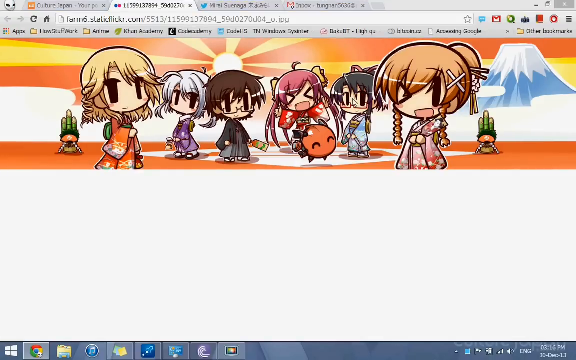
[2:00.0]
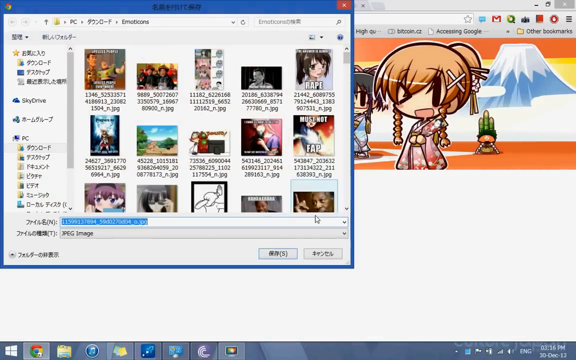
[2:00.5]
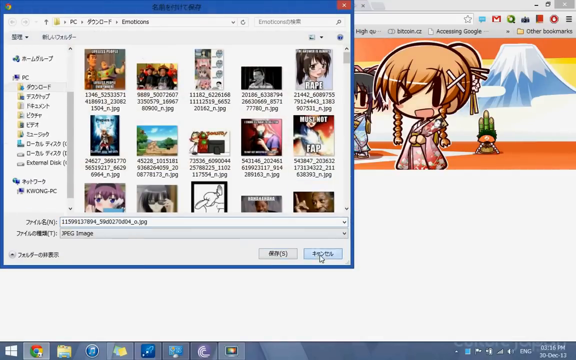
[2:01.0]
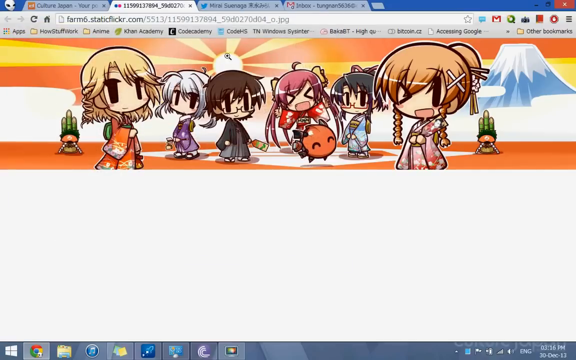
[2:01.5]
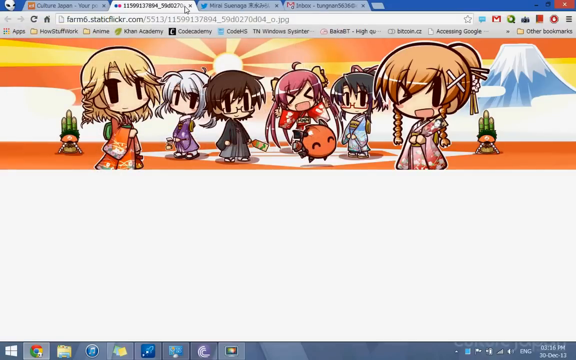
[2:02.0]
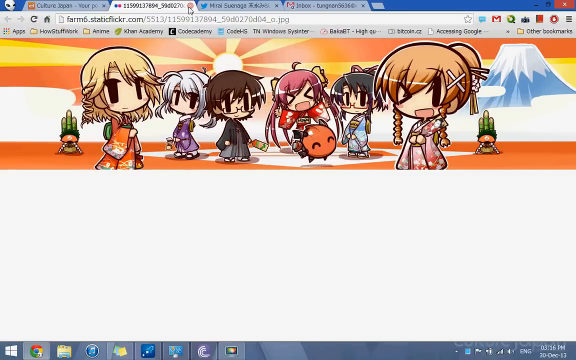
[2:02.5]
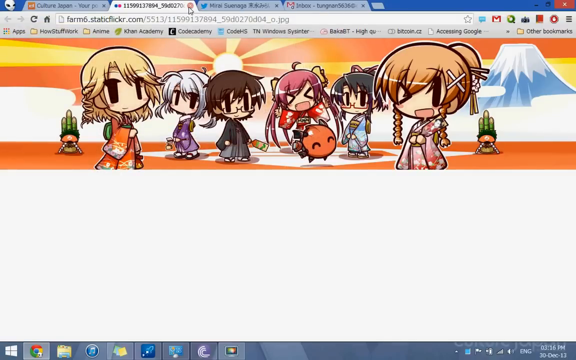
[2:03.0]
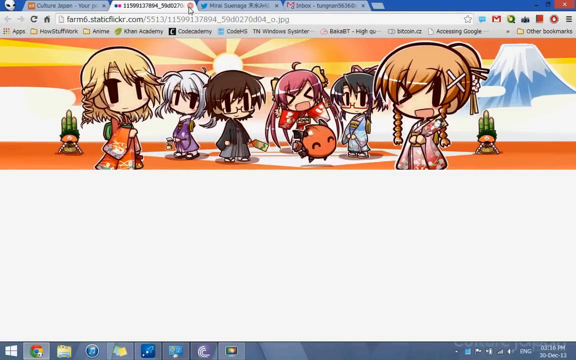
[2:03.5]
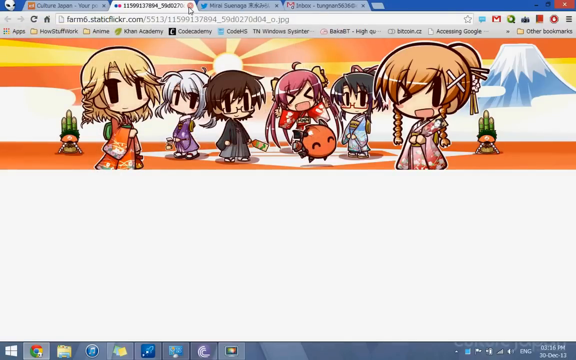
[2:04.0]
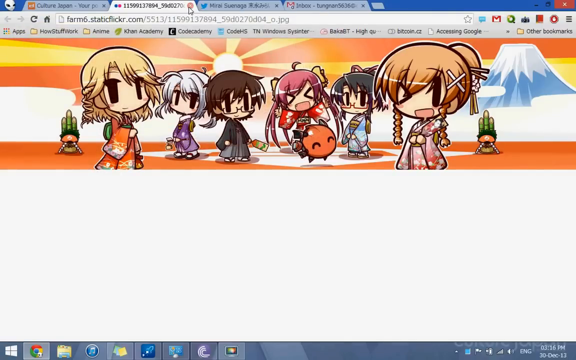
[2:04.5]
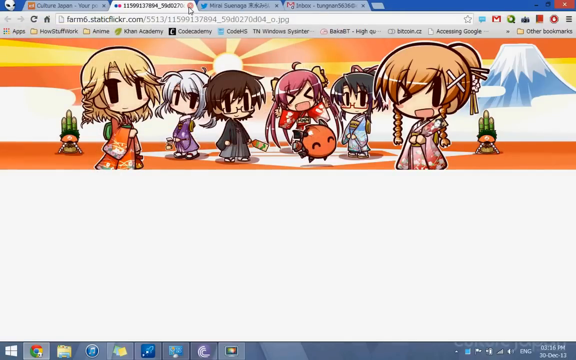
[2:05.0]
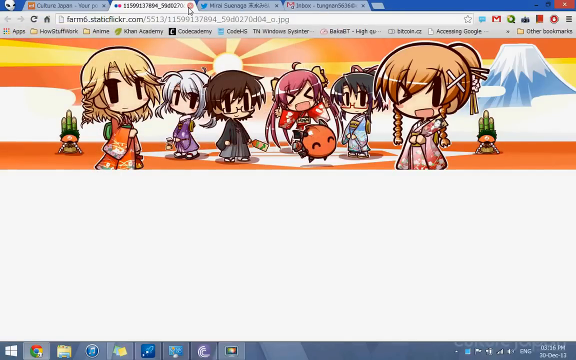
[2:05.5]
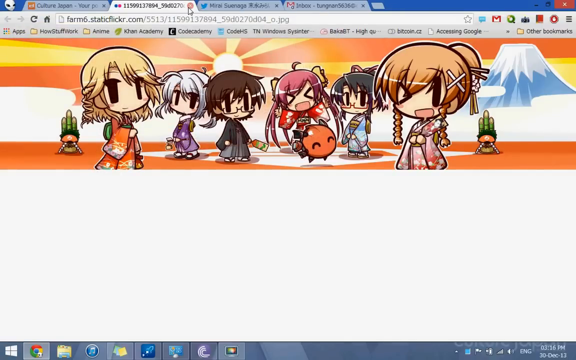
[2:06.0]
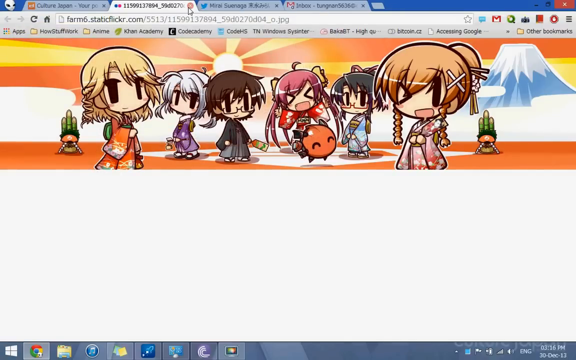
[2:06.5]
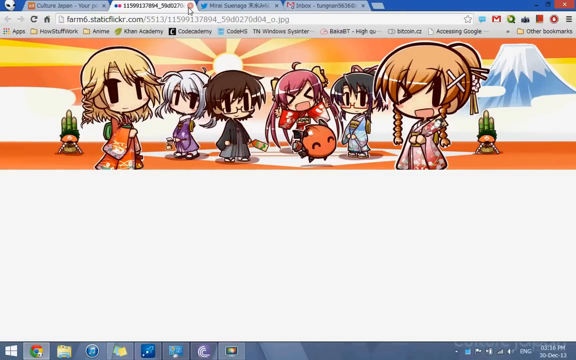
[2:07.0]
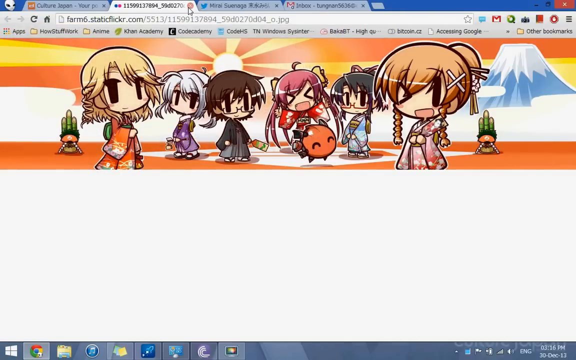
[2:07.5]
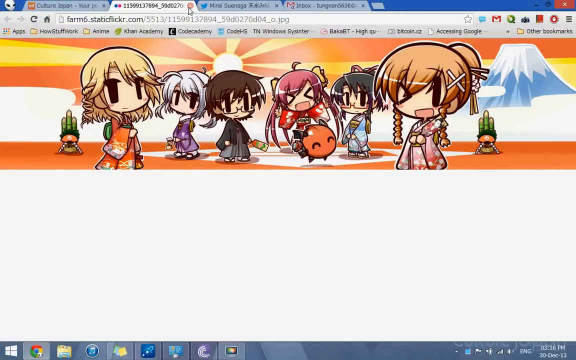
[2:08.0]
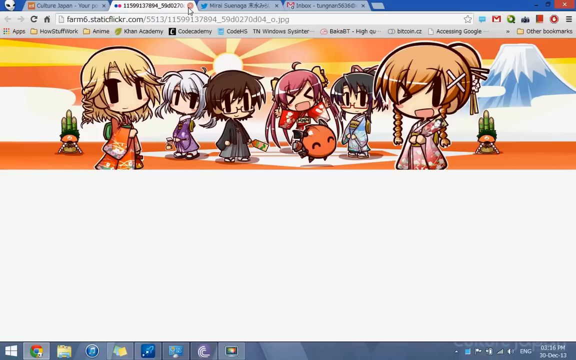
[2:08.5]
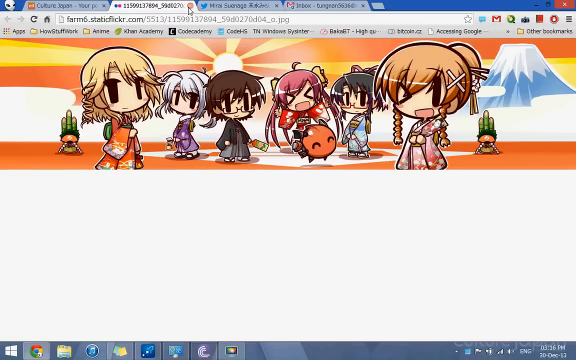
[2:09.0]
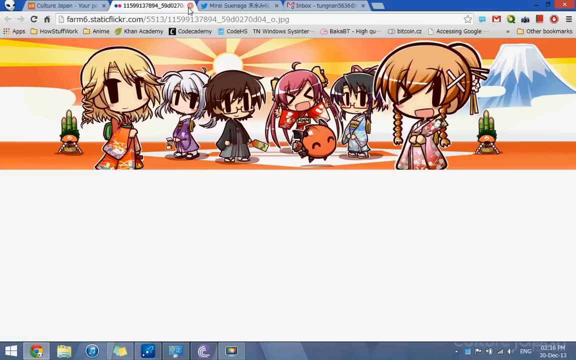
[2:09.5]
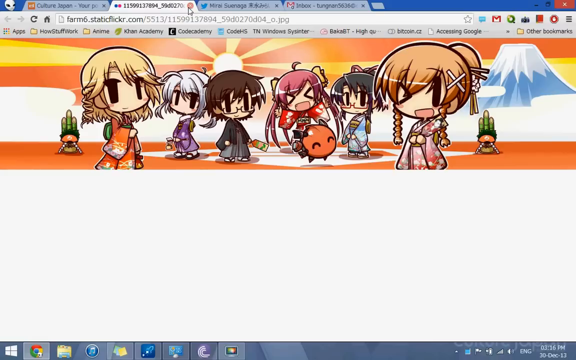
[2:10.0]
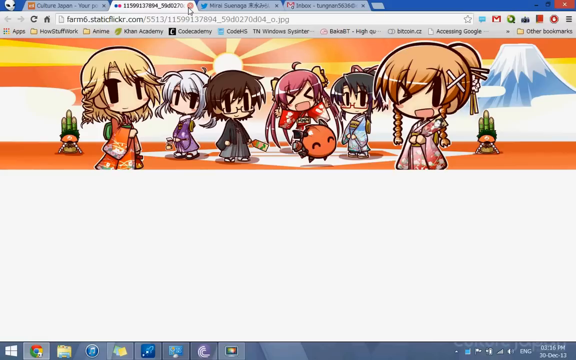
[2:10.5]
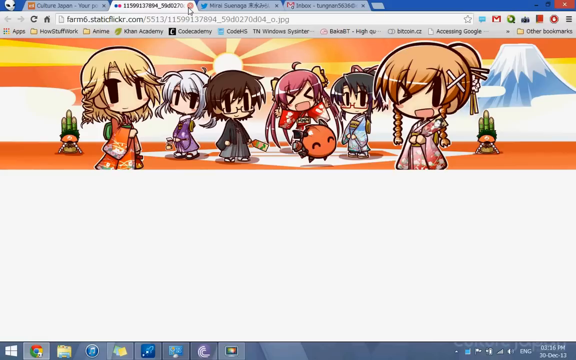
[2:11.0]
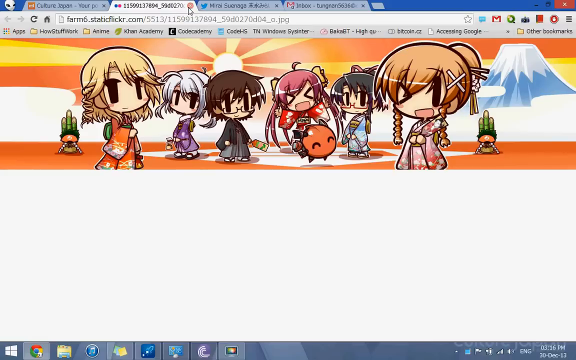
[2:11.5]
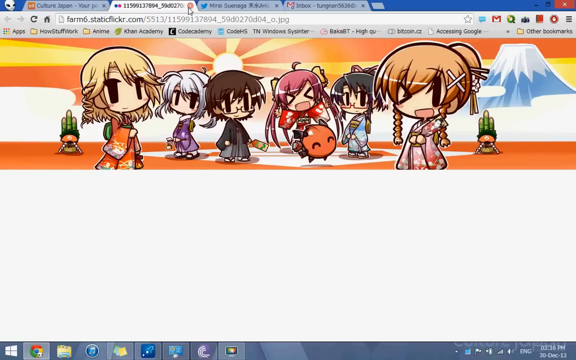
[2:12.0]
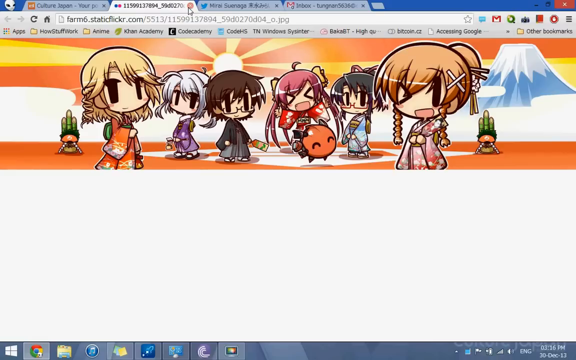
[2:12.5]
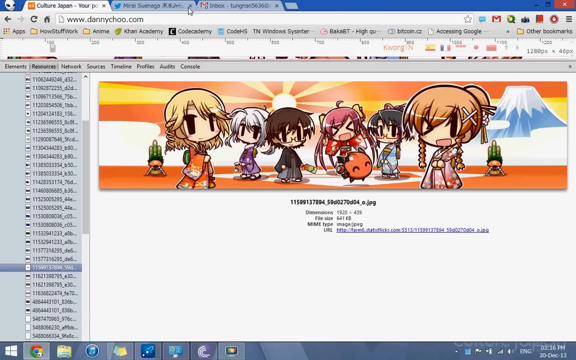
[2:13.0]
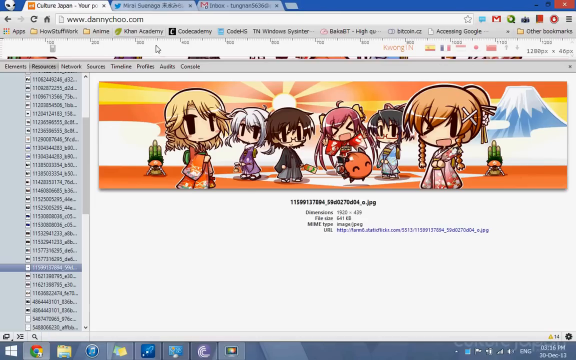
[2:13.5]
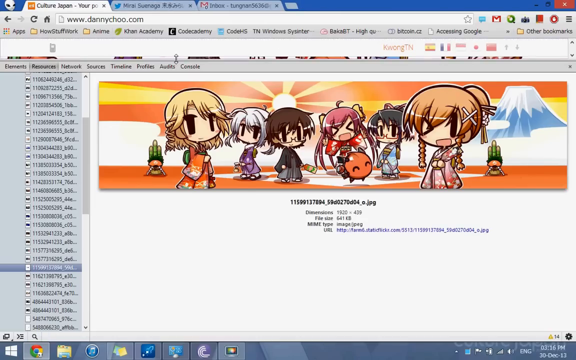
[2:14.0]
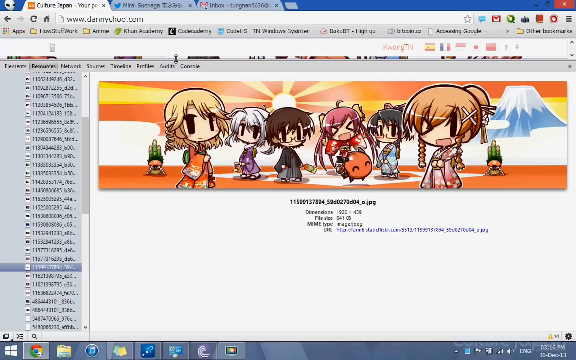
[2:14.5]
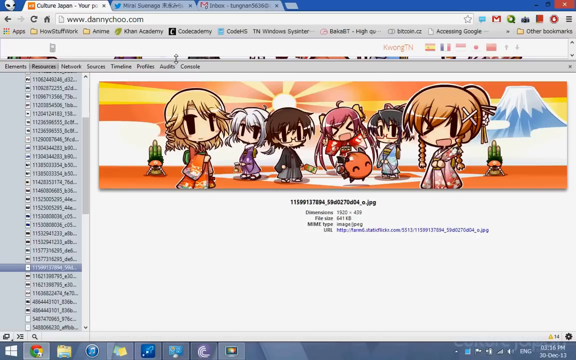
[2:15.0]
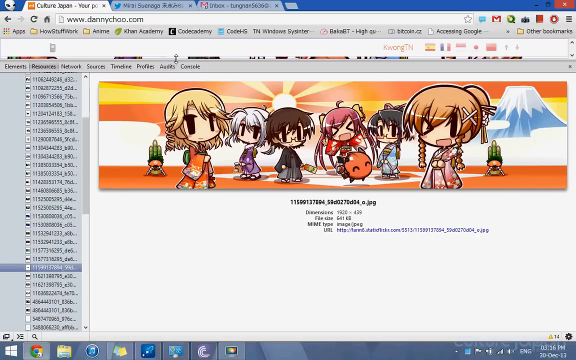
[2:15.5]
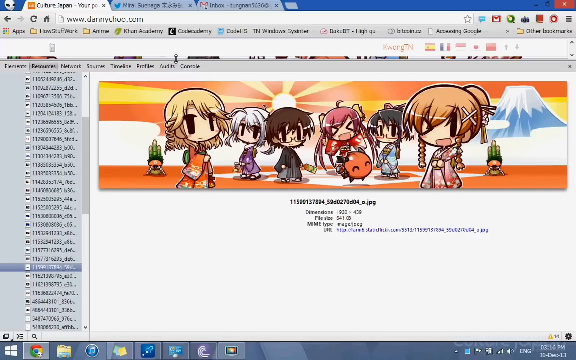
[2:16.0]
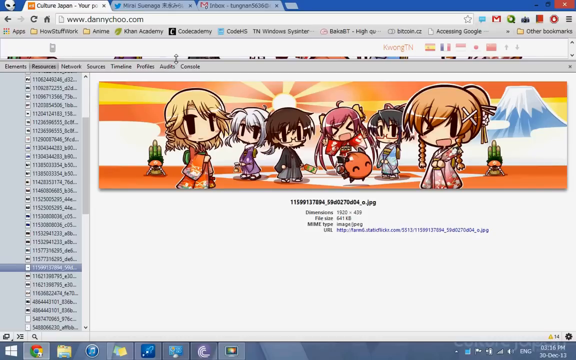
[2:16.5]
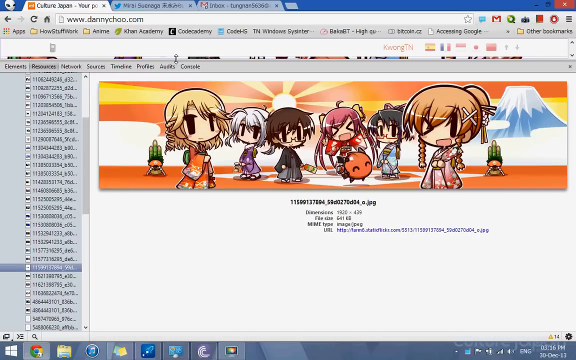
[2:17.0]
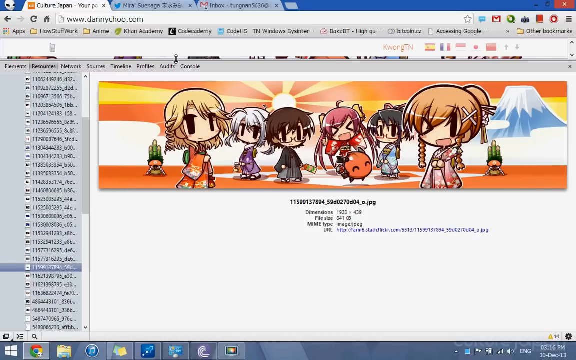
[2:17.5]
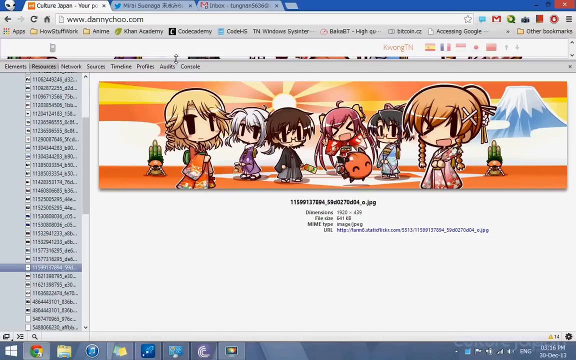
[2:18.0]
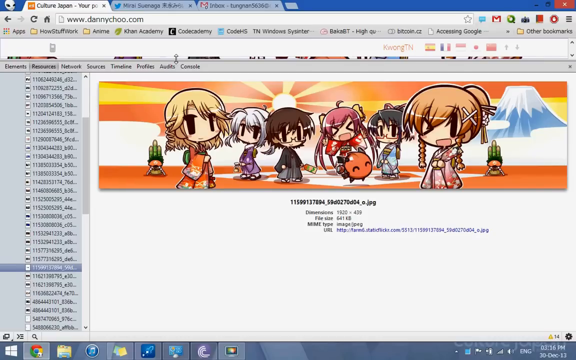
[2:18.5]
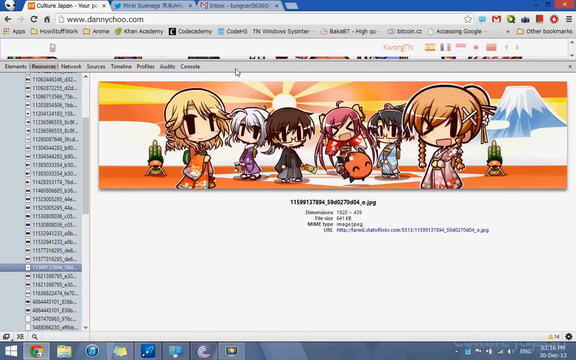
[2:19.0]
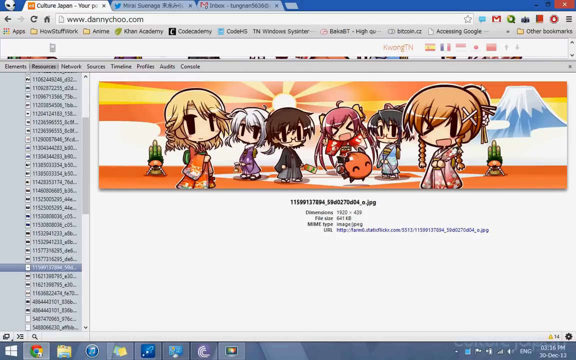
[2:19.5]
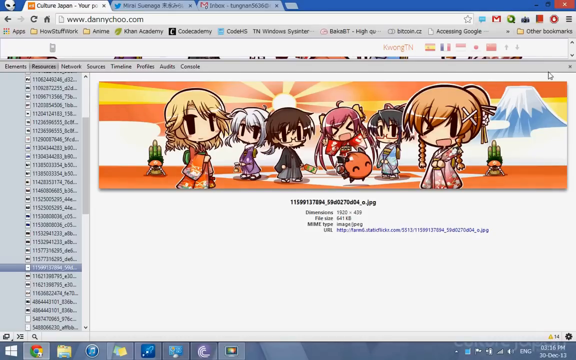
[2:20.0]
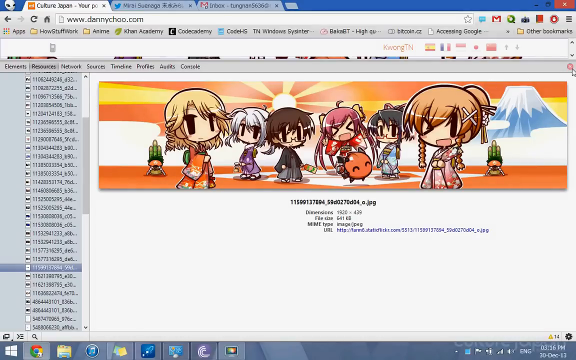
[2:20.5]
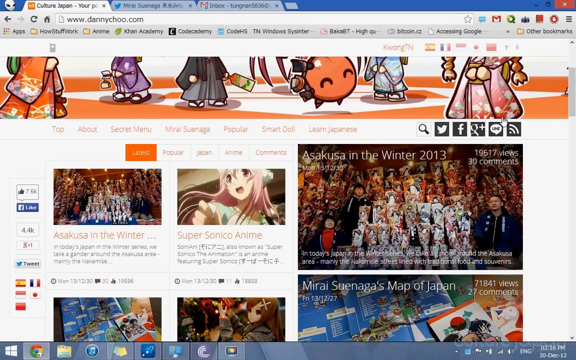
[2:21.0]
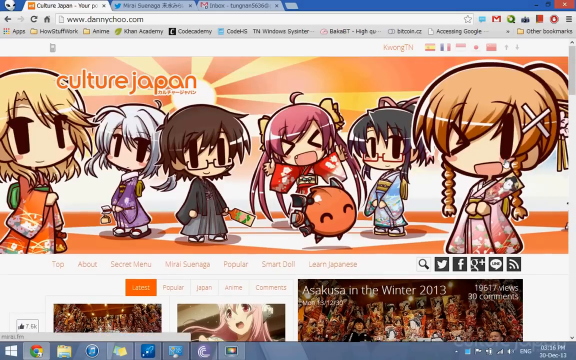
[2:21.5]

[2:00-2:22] Multiple browser tabs are open: the Culture Japan website tab and several image tabs. The heading image tab is open and is then closed, and the same header remains. Another tab is a Flickr tab reading "farms6.staticflicker.com". The other two tabs look unrelated: one is Twitter, showing the blue bird symbol and the name "Mirai Suenaga", the same name seen on the website earlier, and the fourth is an inbox tab with the Gmail logo and a hard-to-read name made of letters and numbers. Those tabs are not clicked.